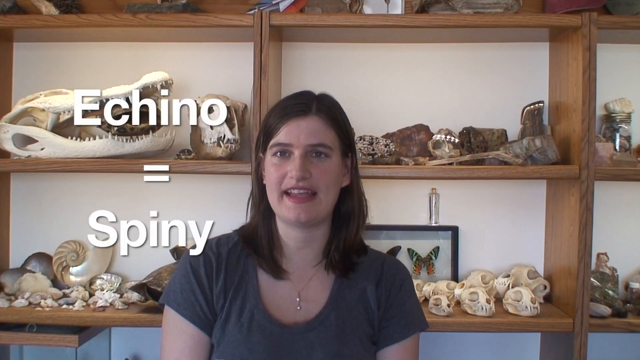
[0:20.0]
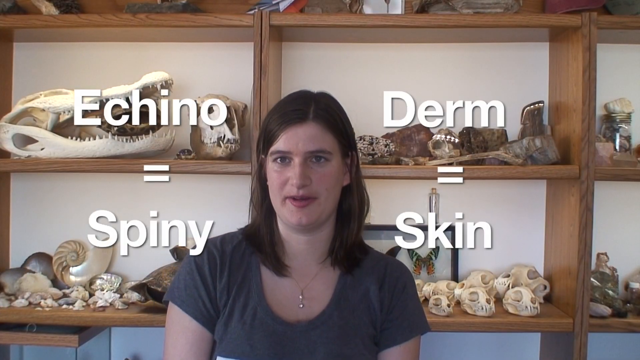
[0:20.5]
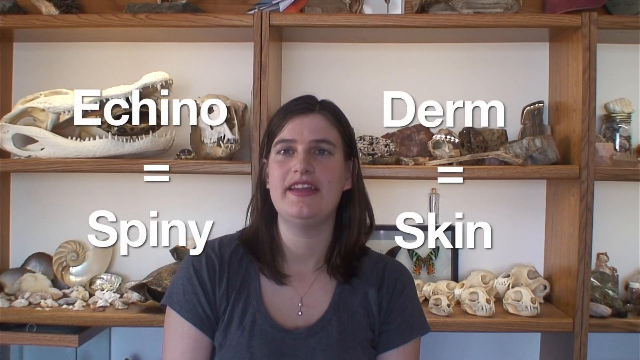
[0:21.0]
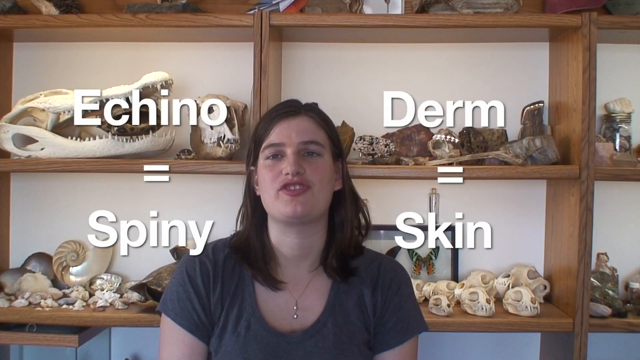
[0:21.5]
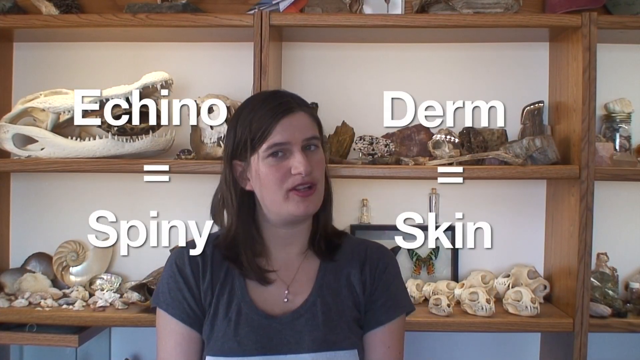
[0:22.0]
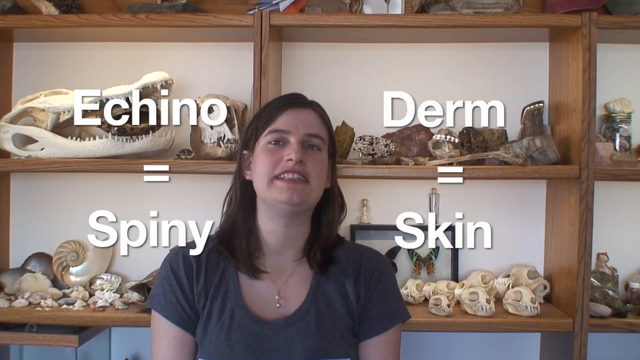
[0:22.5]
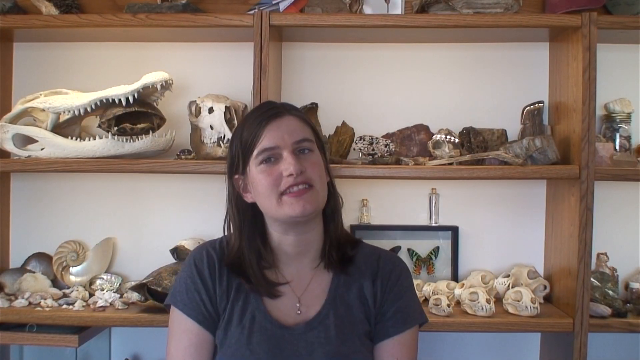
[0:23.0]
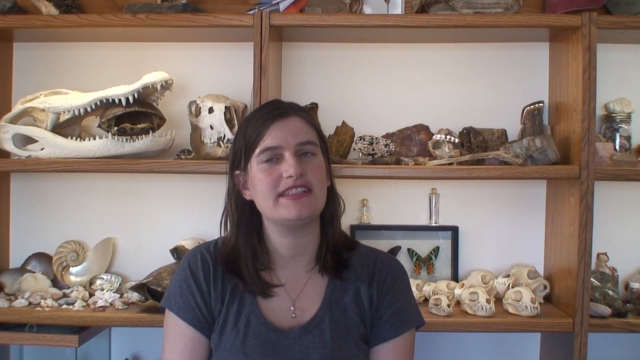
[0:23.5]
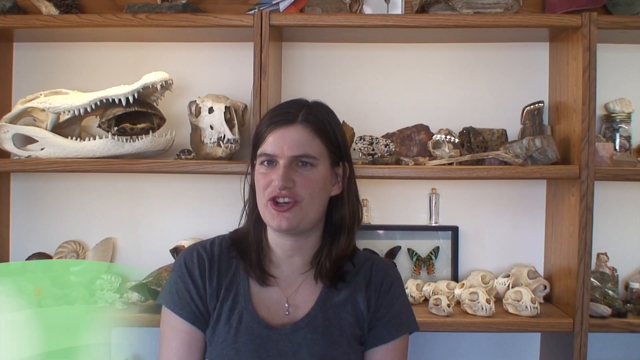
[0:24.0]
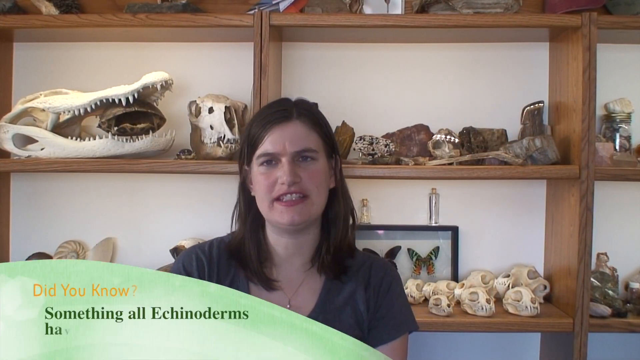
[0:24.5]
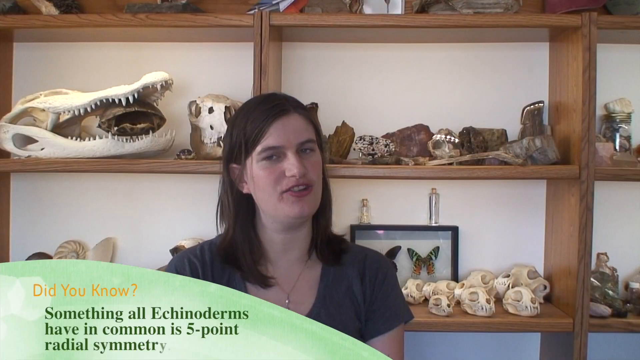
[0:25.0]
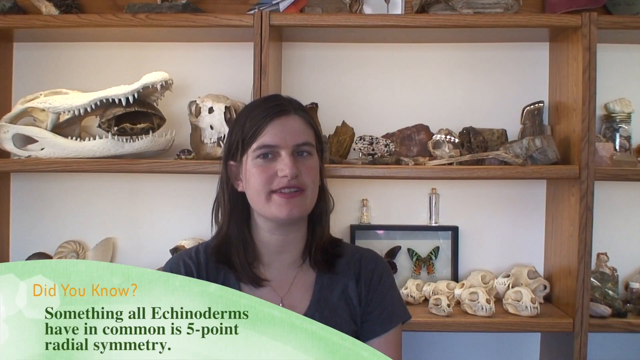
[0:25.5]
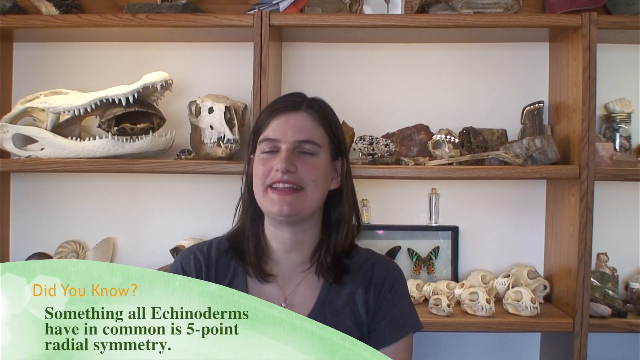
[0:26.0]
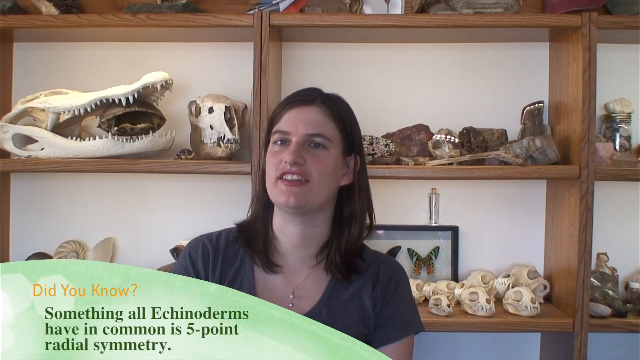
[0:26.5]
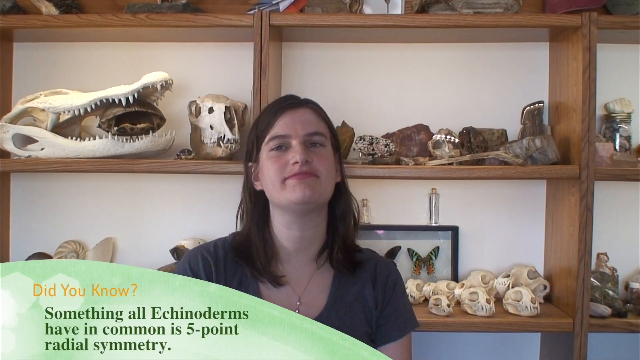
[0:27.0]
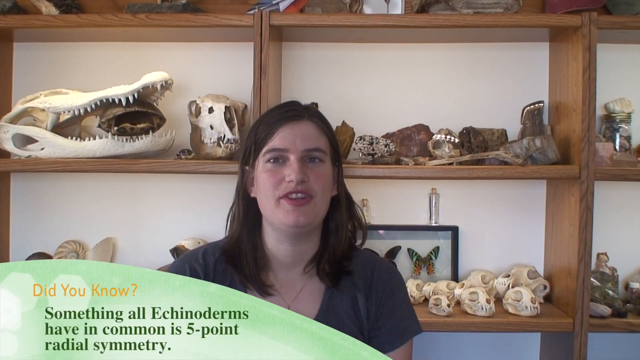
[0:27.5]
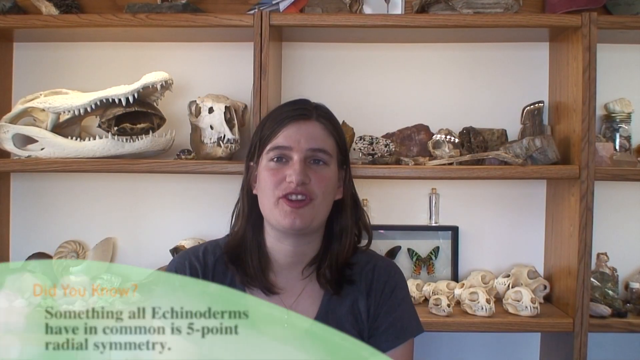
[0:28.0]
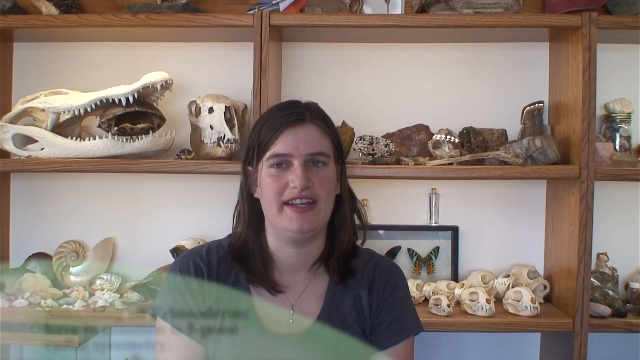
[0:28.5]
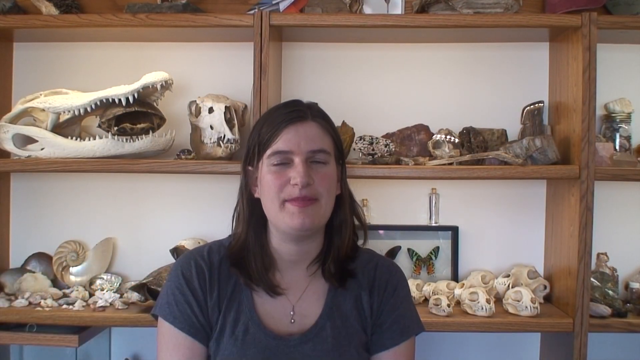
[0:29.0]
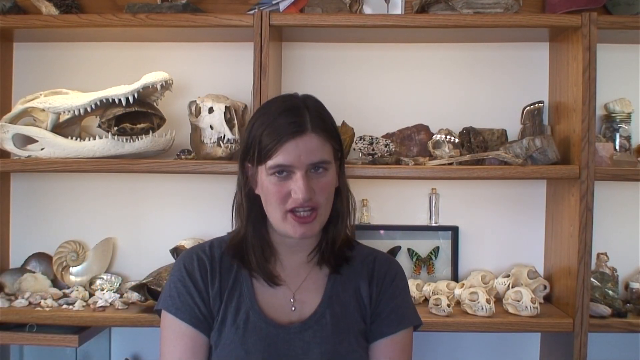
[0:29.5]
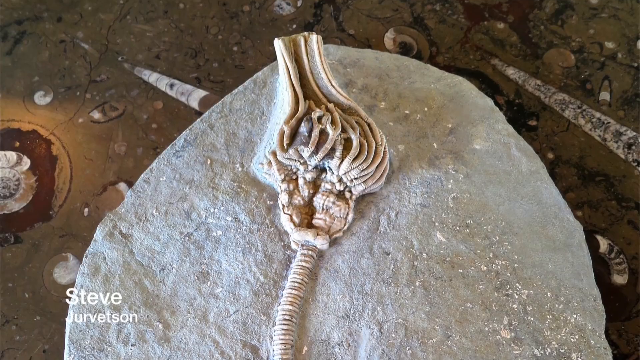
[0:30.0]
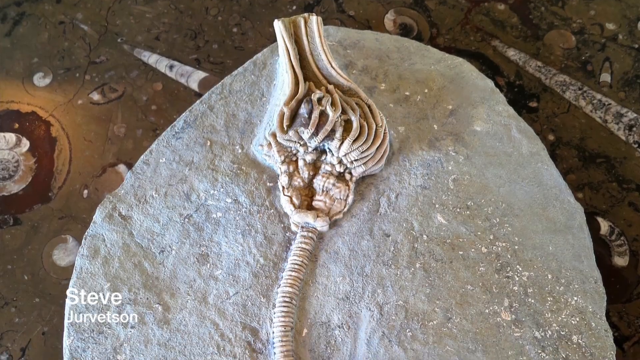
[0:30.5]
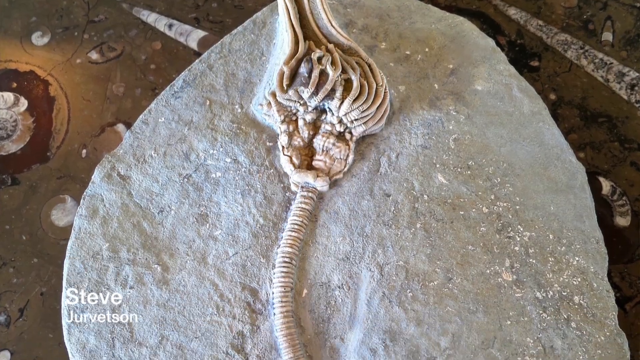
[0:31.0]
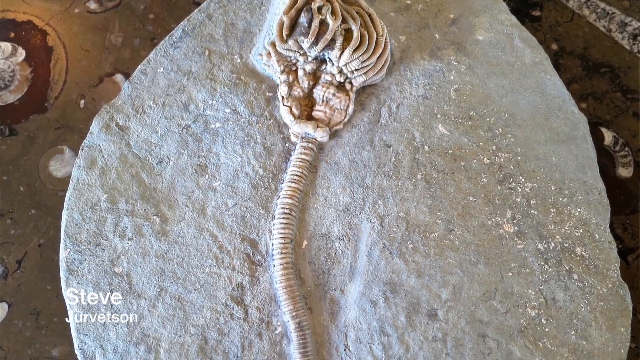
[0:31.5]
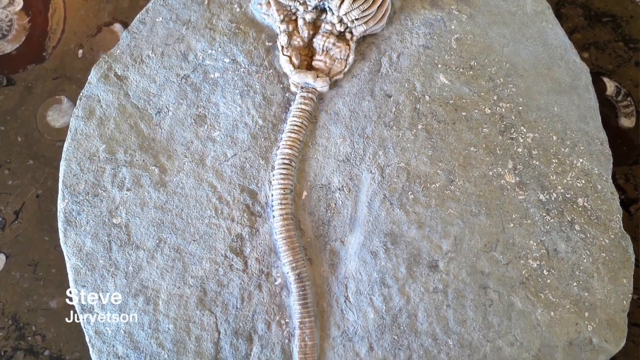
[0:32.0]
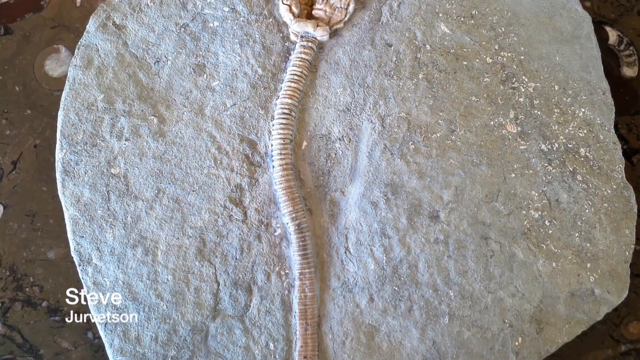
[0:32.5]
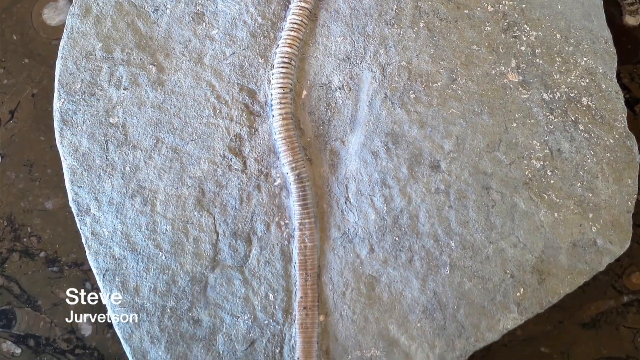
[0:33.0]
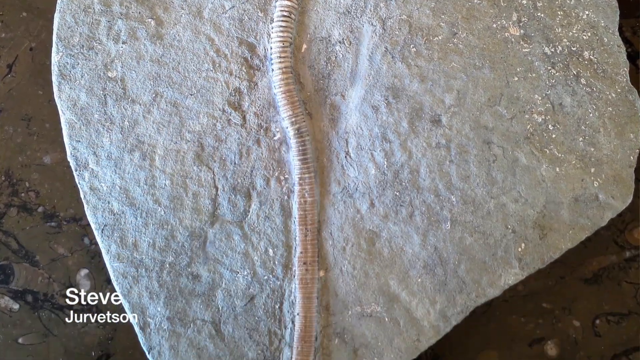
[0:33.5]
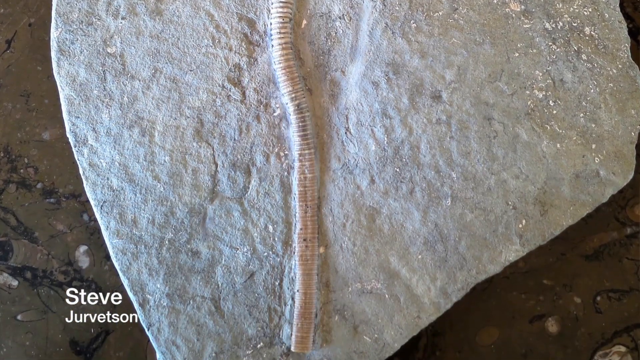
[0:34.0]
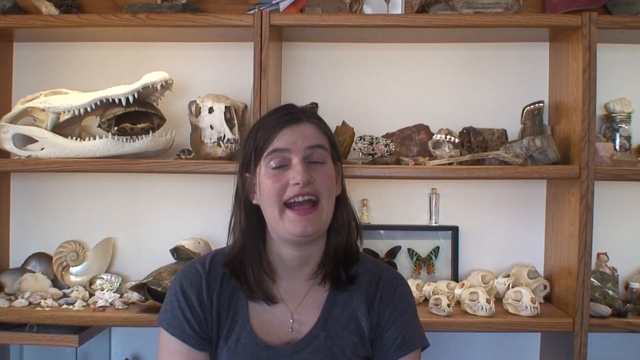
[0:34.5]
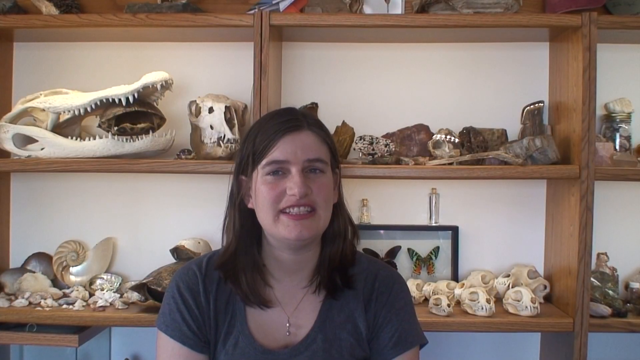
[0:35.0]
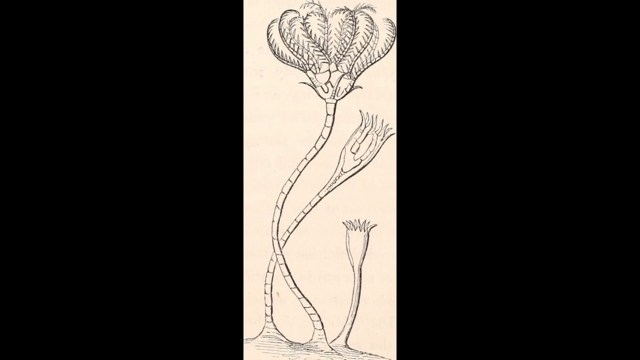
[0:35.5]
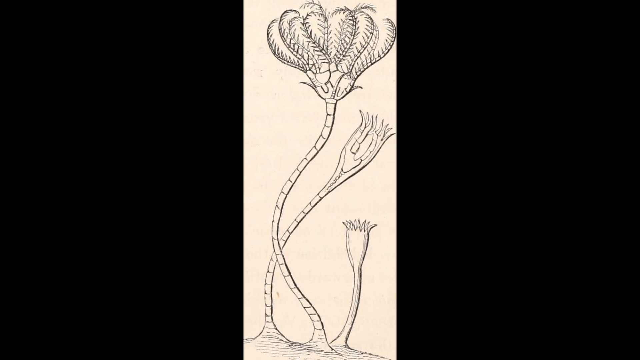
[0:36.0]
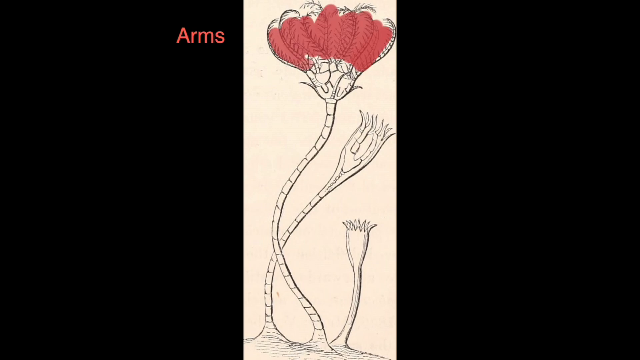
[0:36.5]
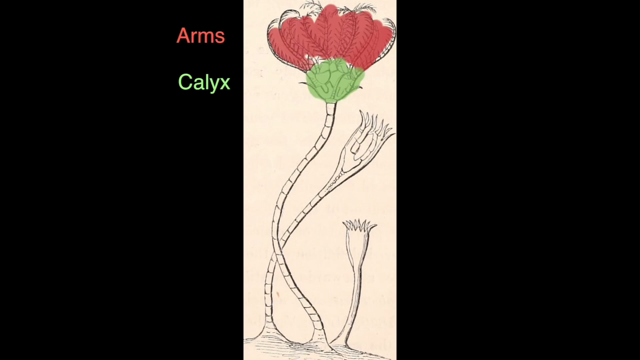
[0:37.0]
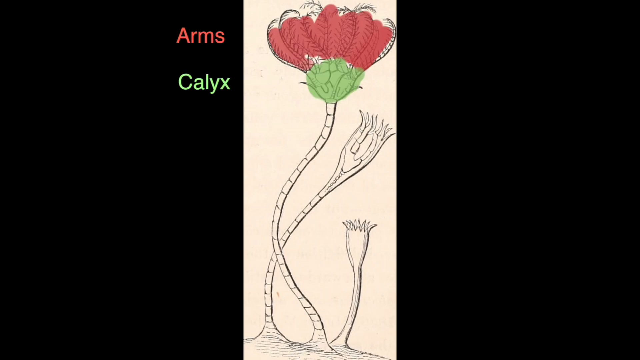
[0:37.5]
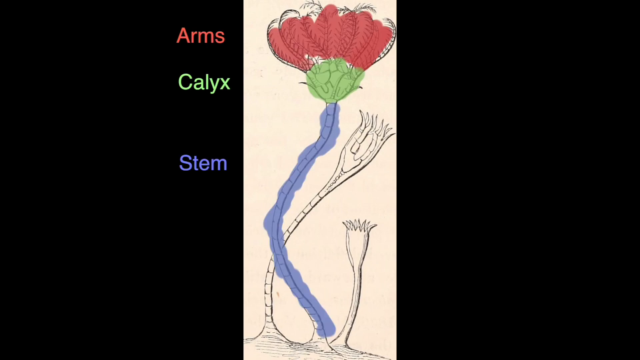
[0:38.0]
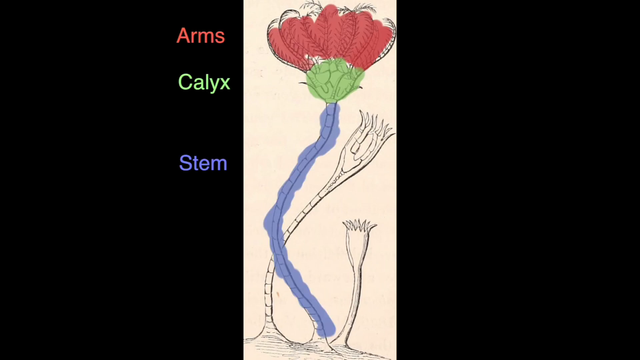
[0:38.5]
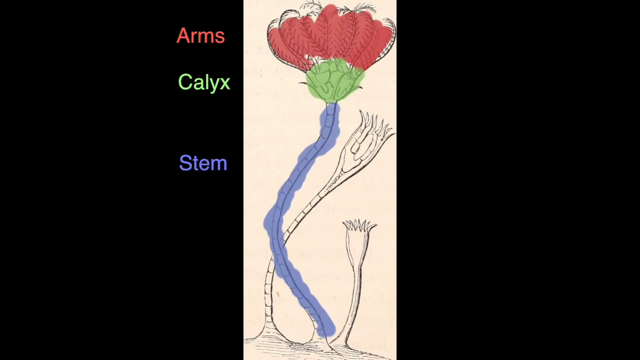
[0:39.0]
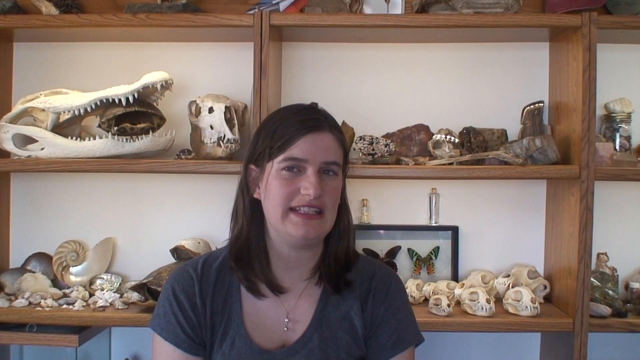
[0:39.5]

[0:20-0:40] The text "Echino = Spiny" is still visible as the woman continues to speak. To her right, another white text overlay appears reading "DERM = SKIN". In the lower left, a message with a green background appears, reading "Did you know?" and containing a fact. The scene transitions to another fossil in the center of the screen, and the camera pans down to show its length; it is quite a large fossil. The scene returns to the speaker, still standing in the center of the screen in front of the shelves filled with fossils and other oddities. It then transitions to a drawing of what appears to be a fossil, with parts of it colored in and their names and corresponding colors shown beside it on the left-hand side. The screen then returns to the speaker.